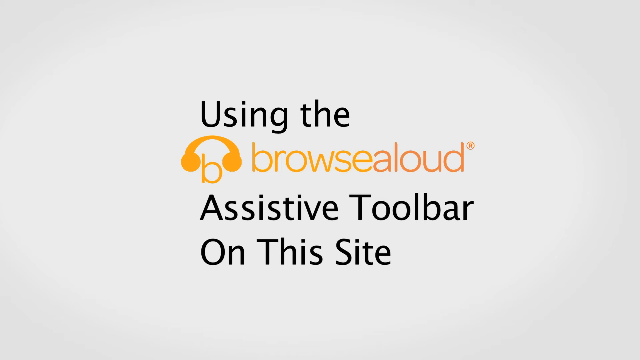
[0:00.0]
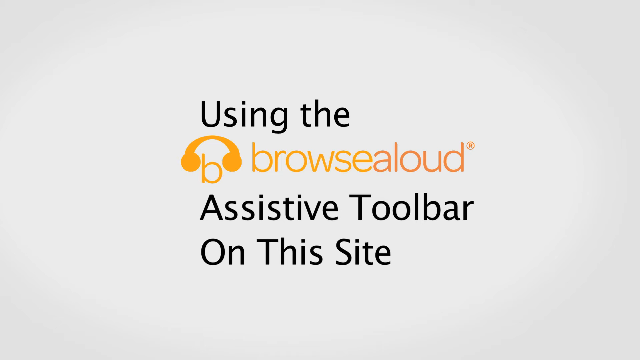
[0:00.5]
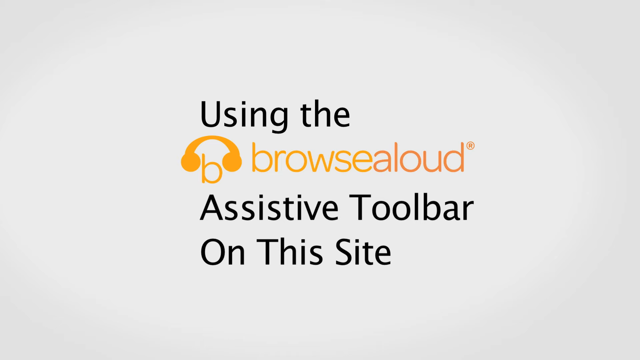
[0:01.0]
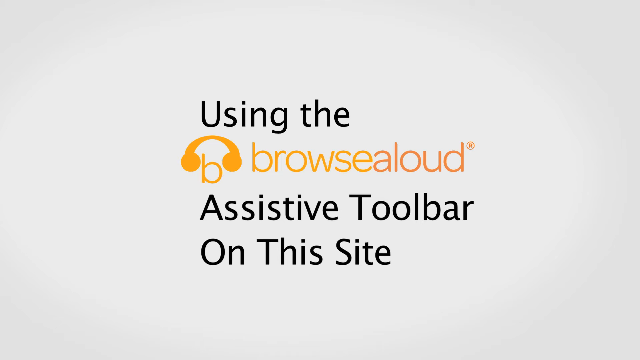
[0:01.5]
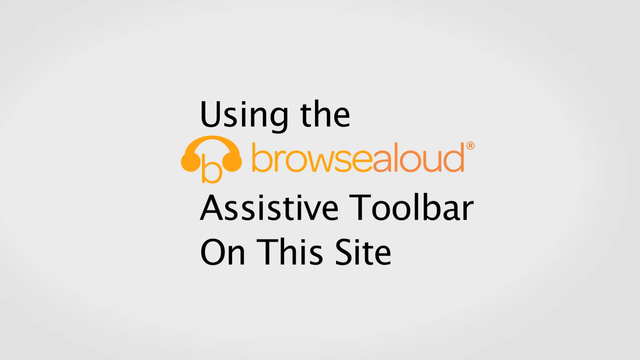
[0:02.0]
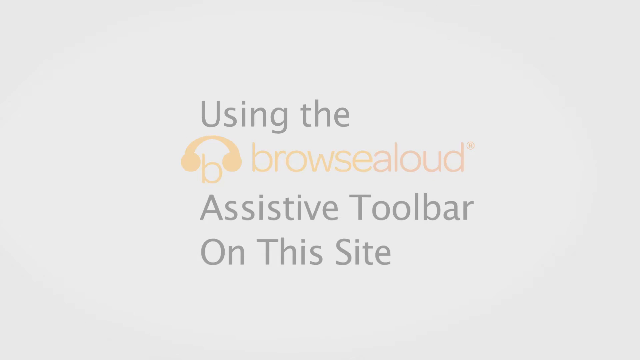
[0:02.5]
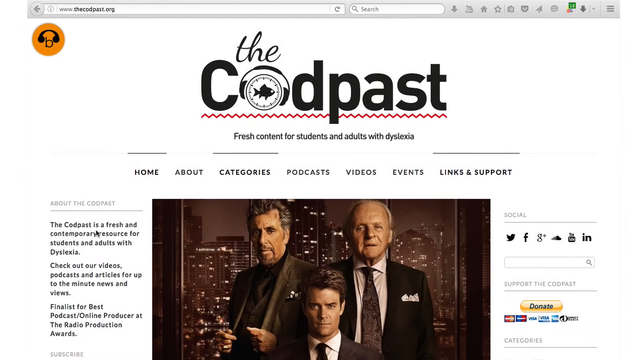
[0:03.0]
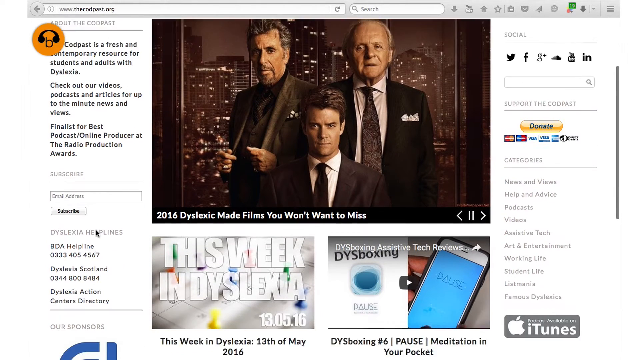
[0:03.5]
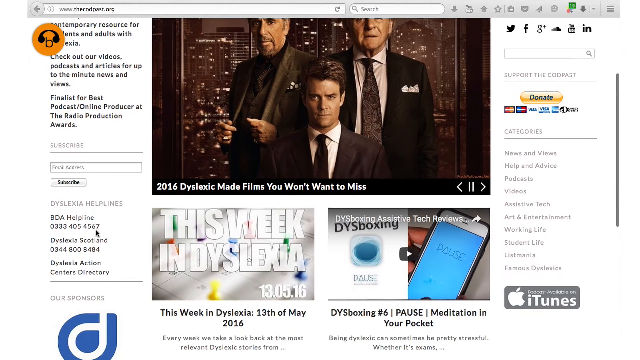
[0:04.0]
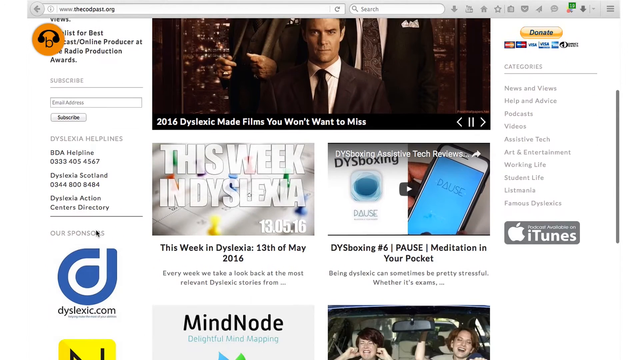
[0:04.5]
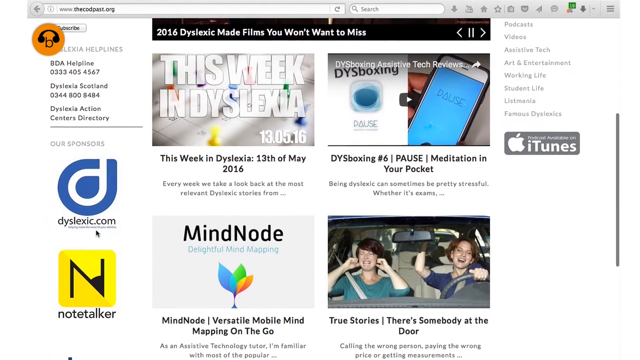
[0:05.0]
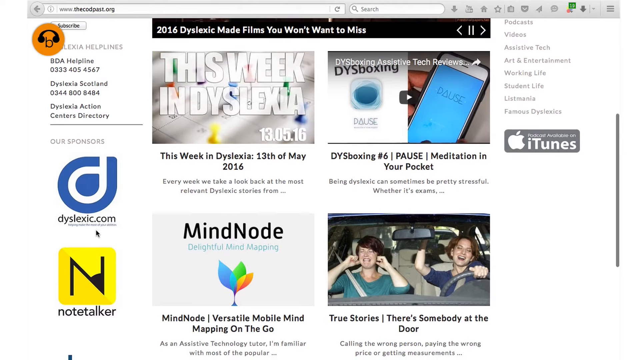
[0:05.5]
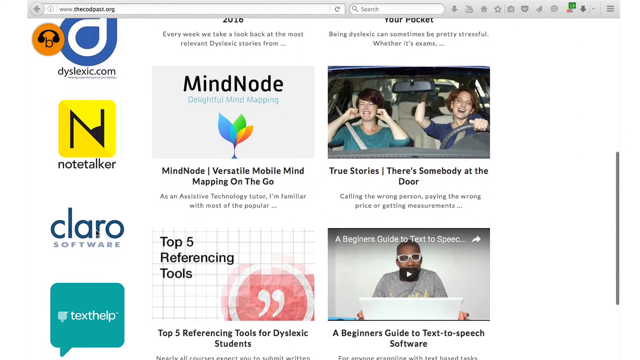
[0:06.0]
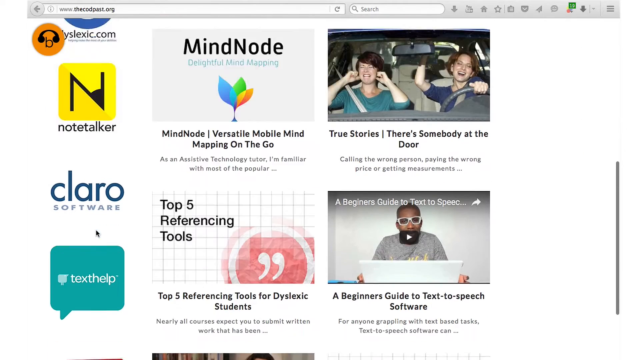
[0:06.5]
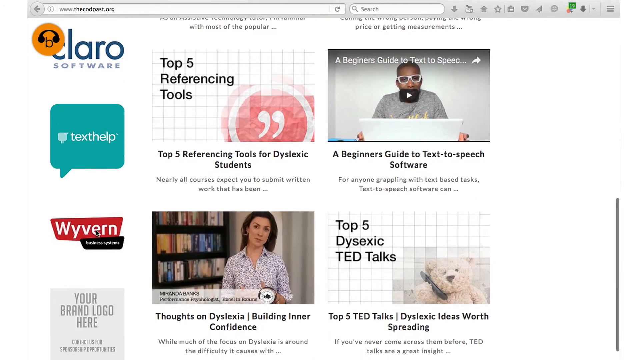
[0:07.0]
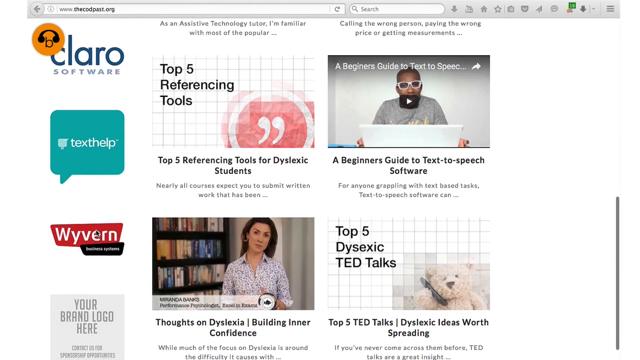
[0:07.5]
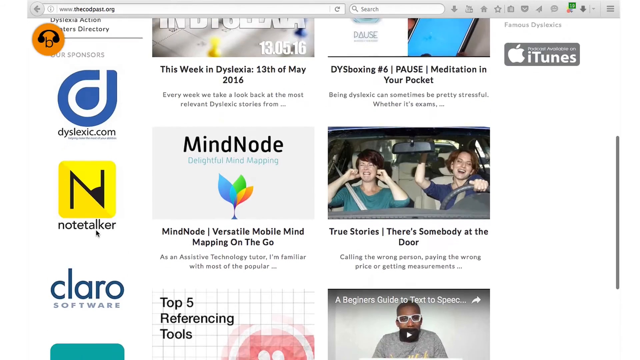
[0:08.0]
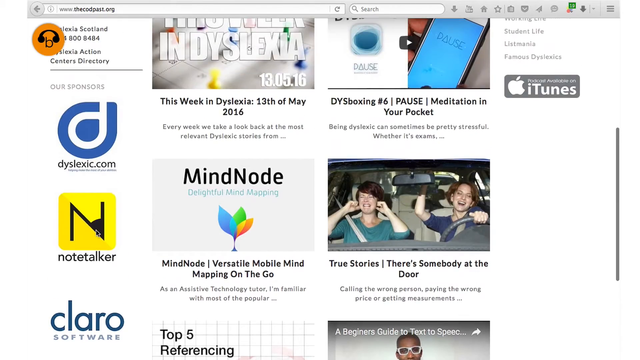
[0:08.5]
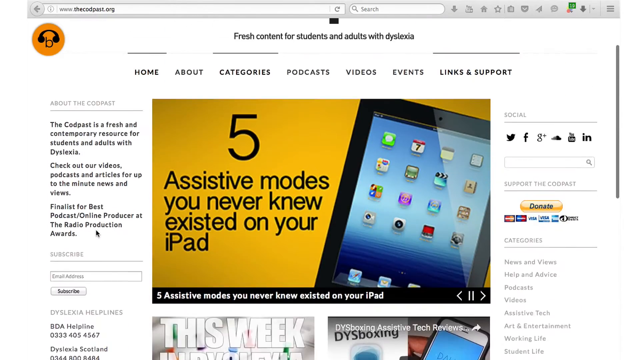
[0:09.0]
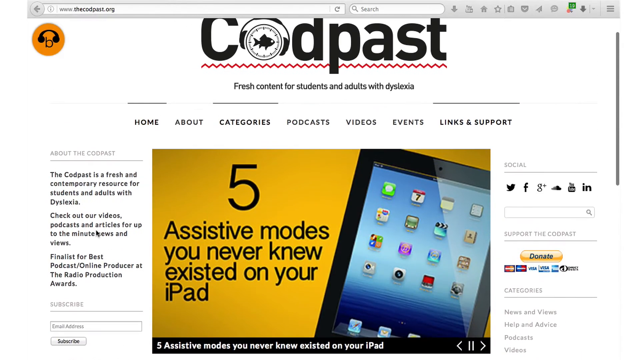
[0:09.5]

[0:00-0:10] At the beginning, the browse aloud assistive toolbar is shown on the side, written on a white background. The video then shows a website called the Codpast. An image shows Al Pacino and Anthony Hopkins standing behind somebody; they are all wearing suits, and the text says "2016 Dyslexia made films you want to miss." At the top left of the page it says "the Codpast is a fresh and contemporary resource for students and adults with dyslexia. Check out our videos and podcasts and articles for up to the minute news and views. Finalists for best podcast online producer at the Rodeo Production Awards." Below that it reads "this week in Dyslexia 13th of May 2016. Every week we take a look back at the most relevant dyslexic stories from…"